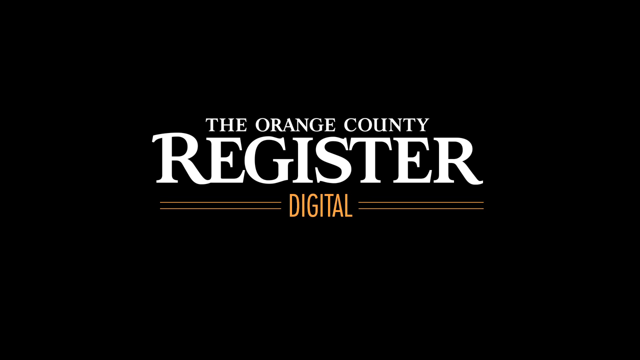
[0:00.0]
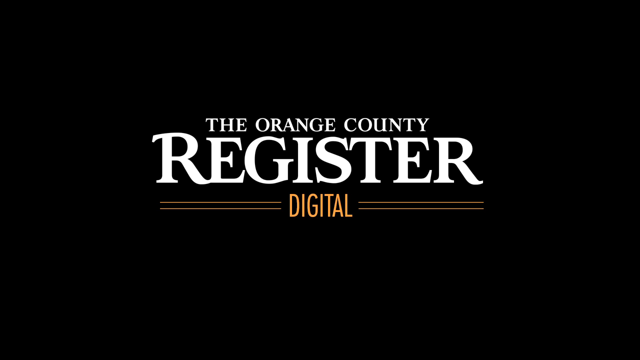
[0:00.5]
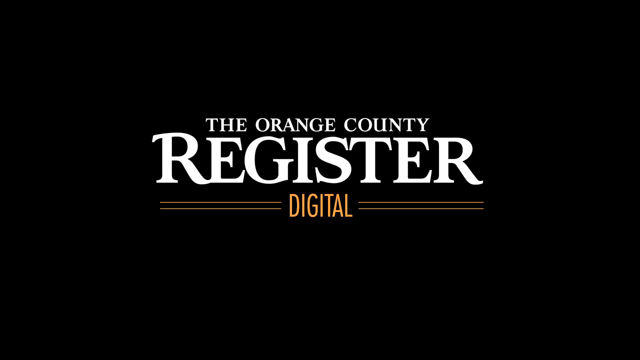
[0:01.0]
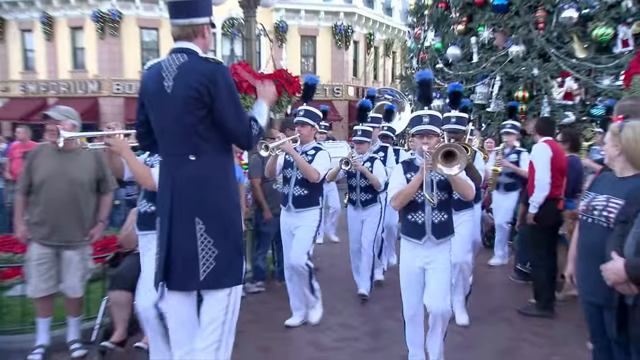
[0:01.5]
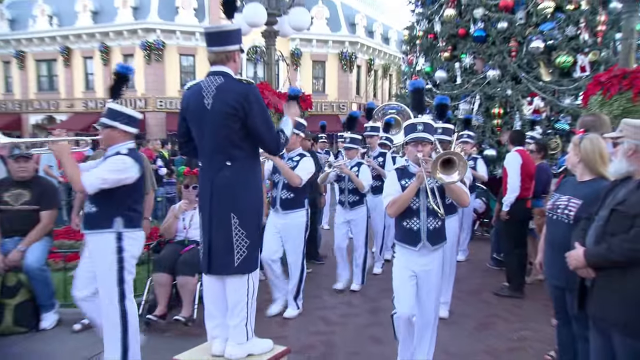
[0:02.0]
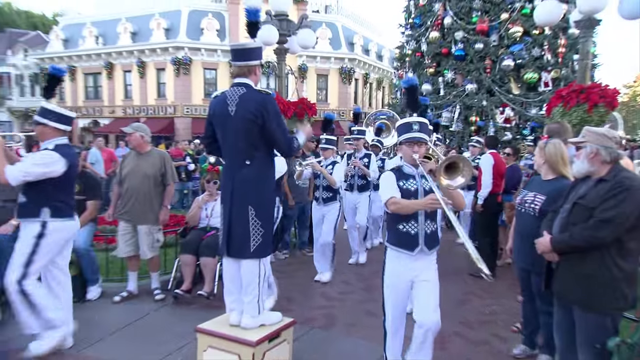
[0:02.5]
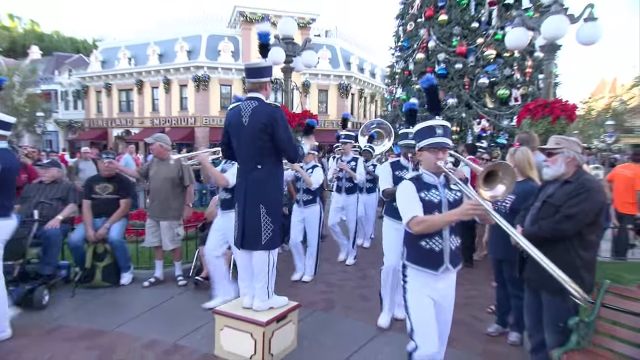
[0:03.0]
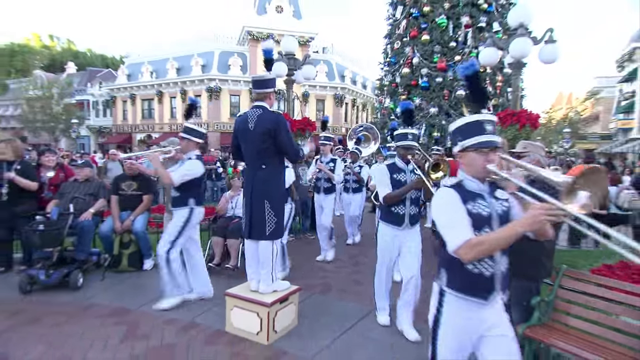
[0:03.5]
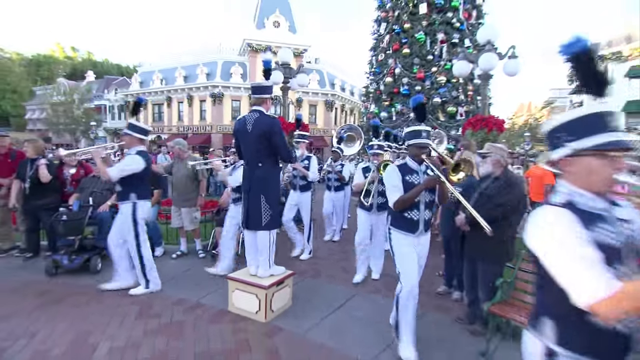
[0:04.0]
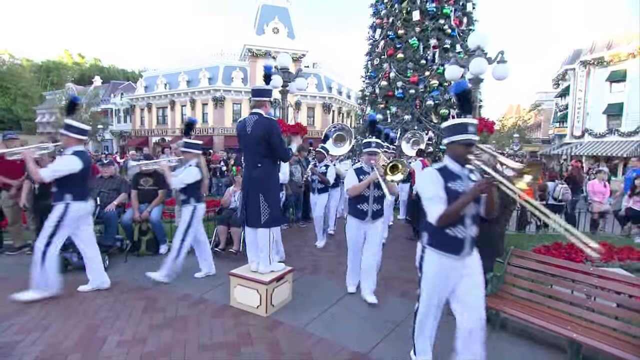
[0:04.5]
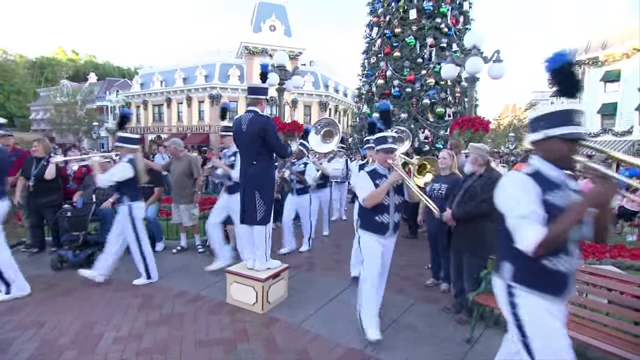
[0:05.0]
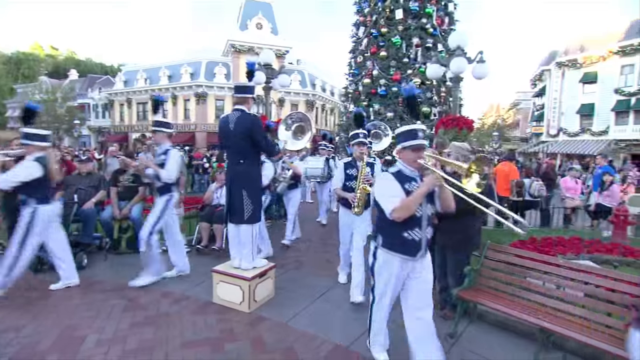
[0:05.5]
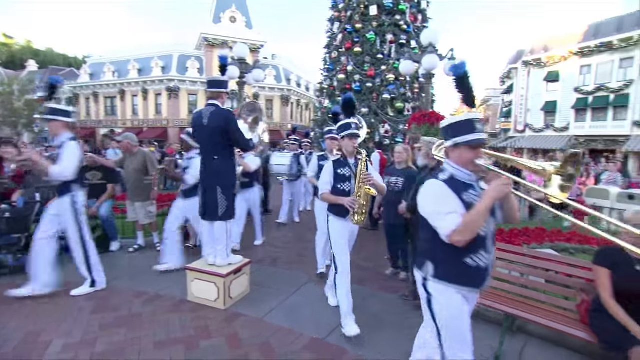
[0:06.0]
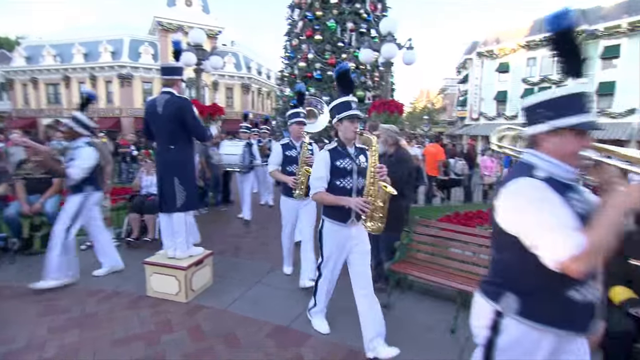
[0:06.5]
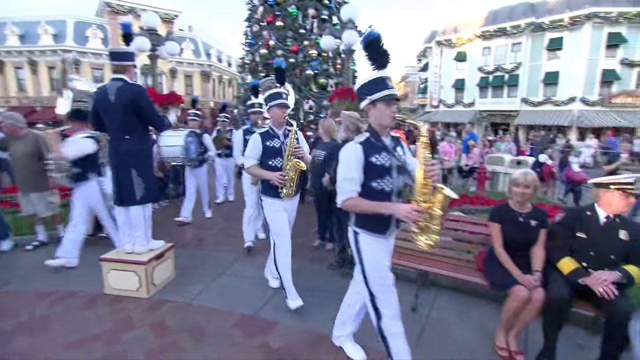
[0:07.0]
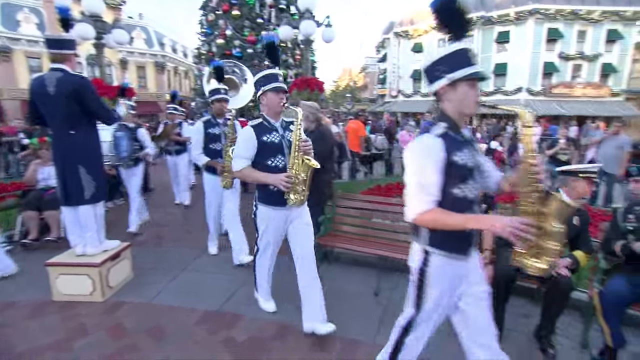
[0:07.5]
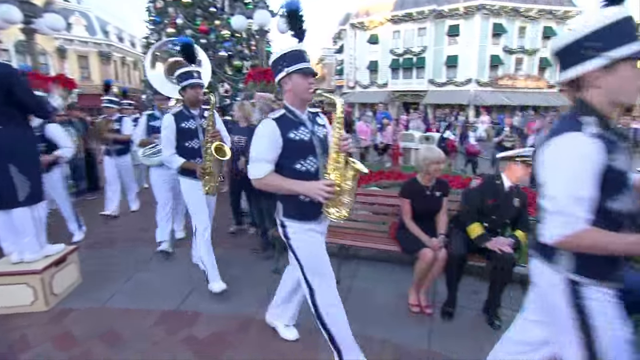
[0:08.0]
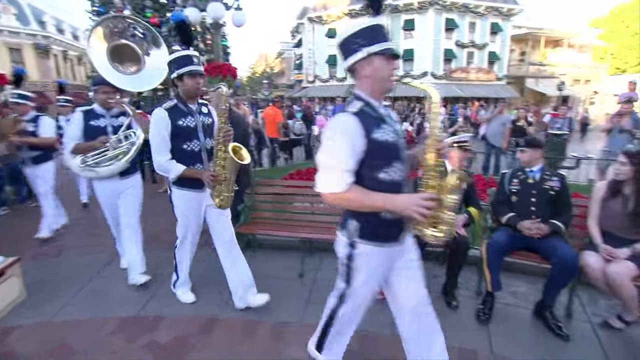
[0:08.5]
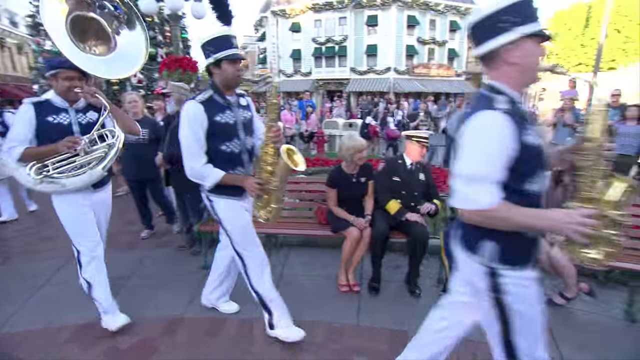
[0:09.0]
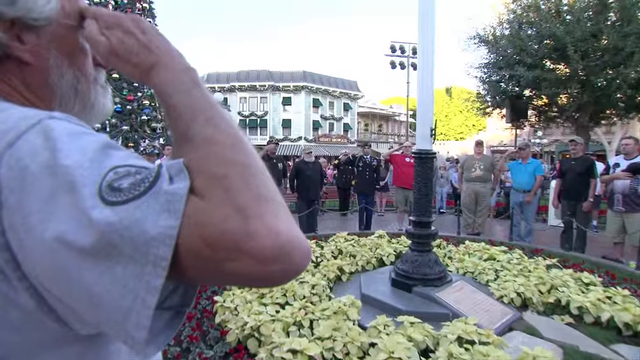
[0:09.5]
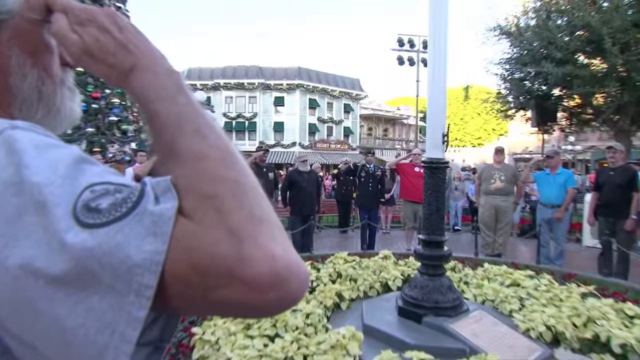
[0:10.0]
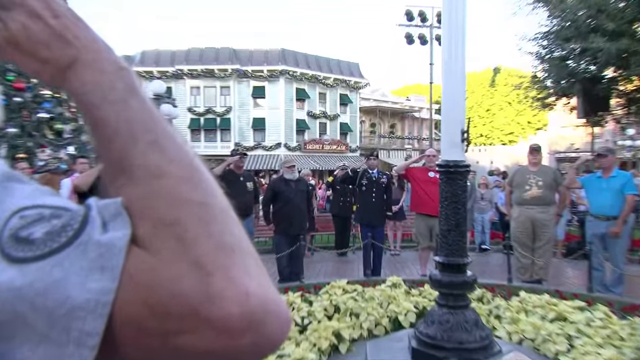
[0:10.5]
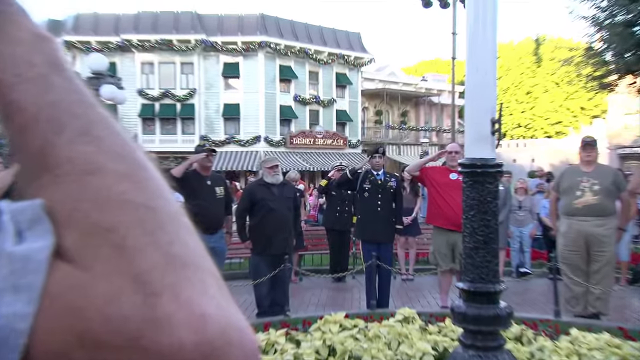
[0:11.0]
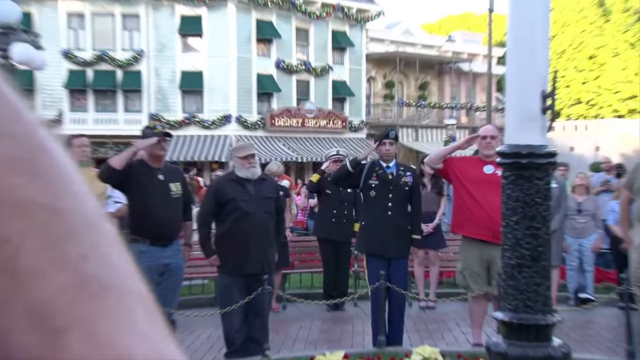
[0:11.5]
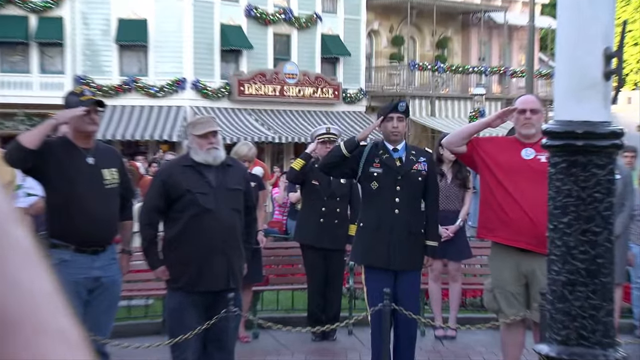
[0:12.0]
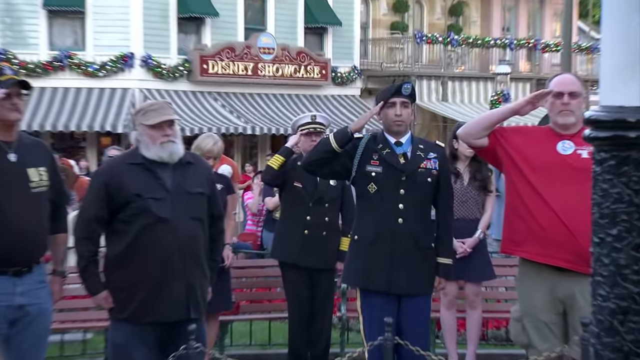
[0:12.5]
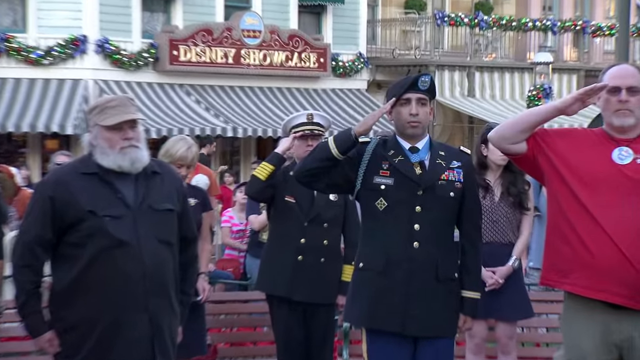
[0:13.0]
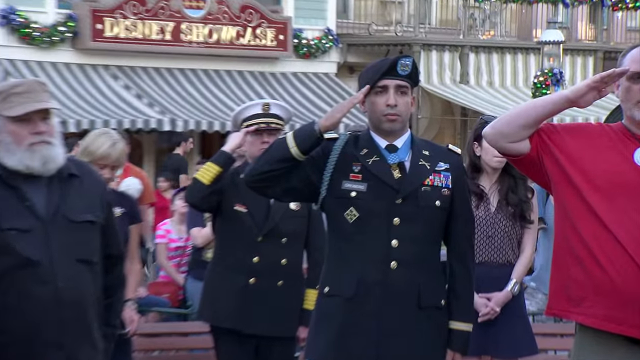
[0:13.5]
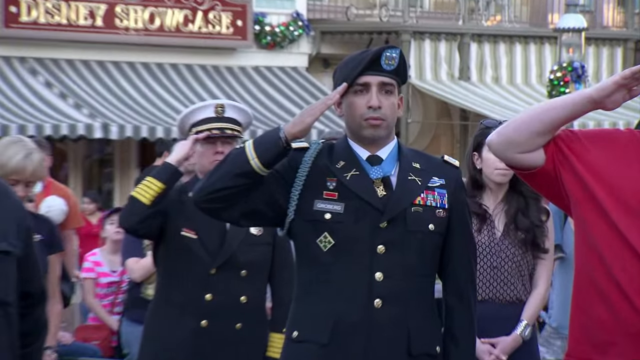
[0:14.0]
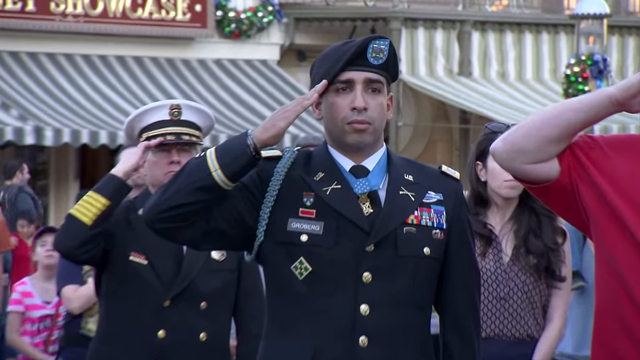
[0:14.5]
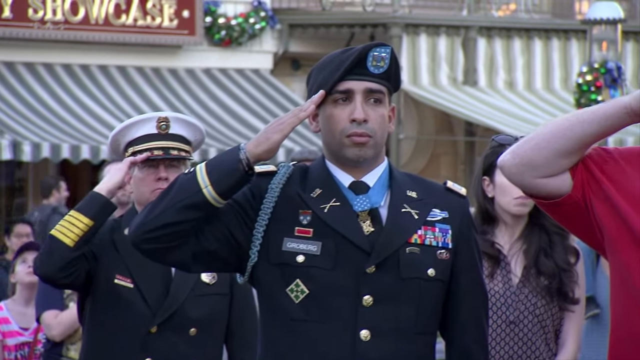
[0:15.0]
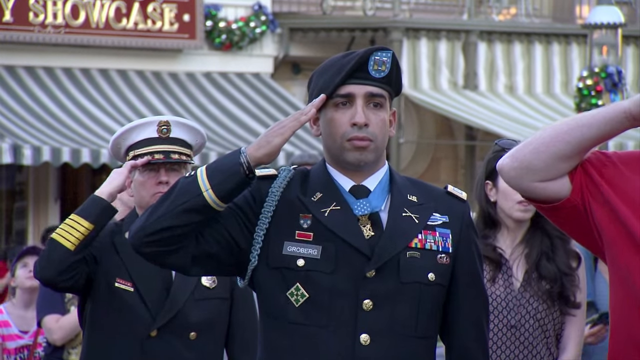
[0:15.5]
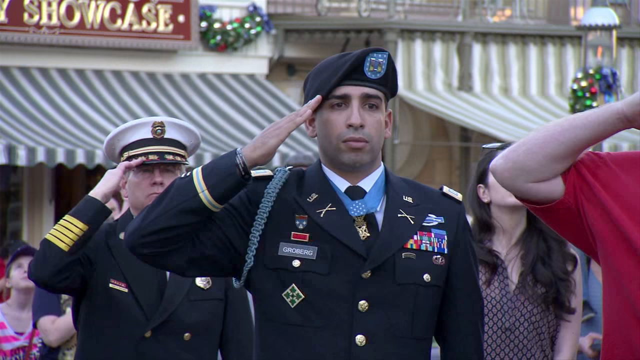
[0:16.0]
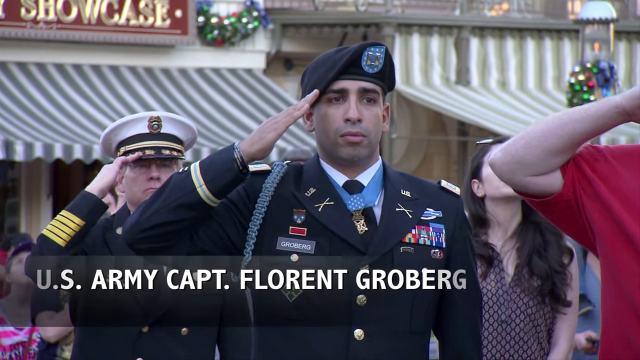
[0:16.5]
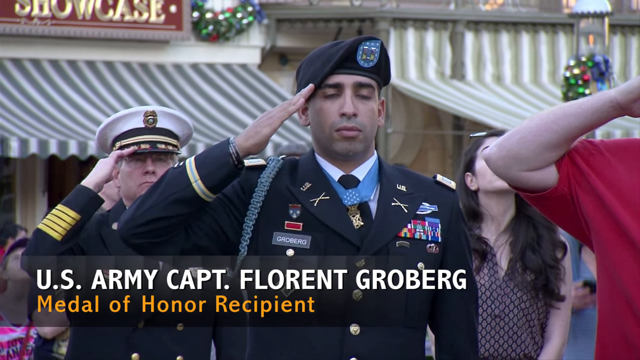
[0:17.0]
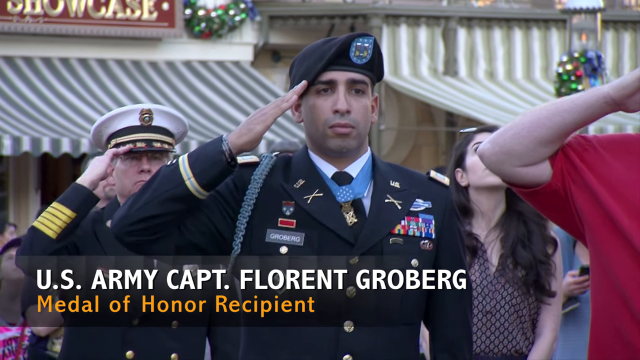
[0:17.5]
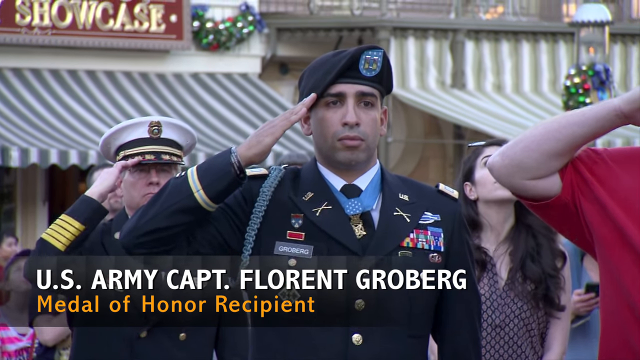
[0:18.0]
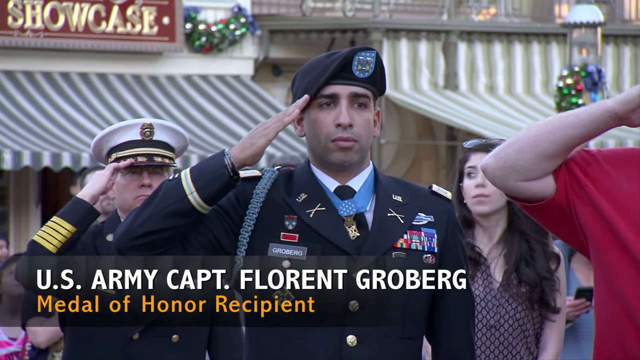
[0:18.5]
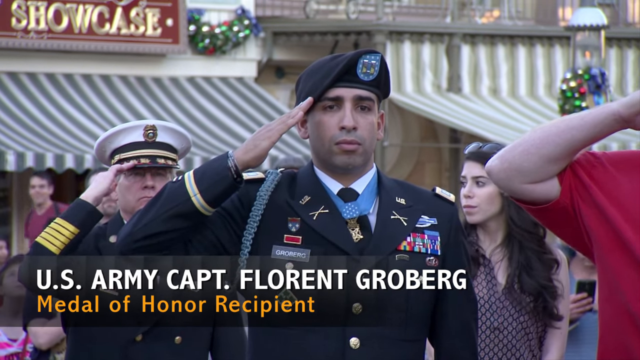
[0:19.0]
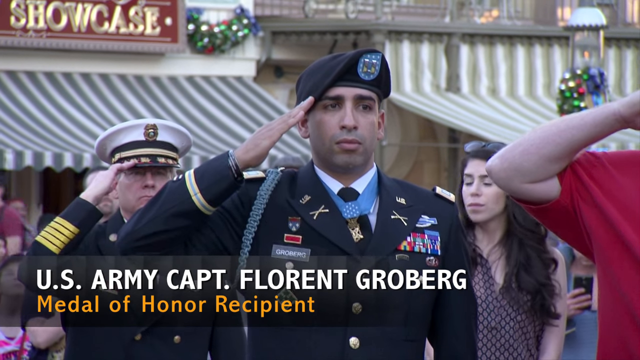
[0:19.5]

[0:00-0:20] The video opens on a black screen with the text "the Orange County Register": "Orange County" is in white capital letters in a serif font, "Register" is underneath in very large white letters, and below that "Digital" appears in gold, with two lines on either side of "Digital" extending out to the edges of "Register." The scene then switches to a marching band marching along at the entrance of Disneyland, just inside the gates. The band members wear mostly blue and white uniforms, and the view is mostly of trumpets and large tubas coming in. A man stands on a pedestal with his back to the camera, leading them. The area appears to be decorated for Christmas, with a large Christmas tree with ornaments, and people are milling about. The video then cuts to a close-up of military personnel in formal military uniform standing at attention in a salute, and focuses on one man in front, labeled "U.S. Army Captain Florent Groberg."